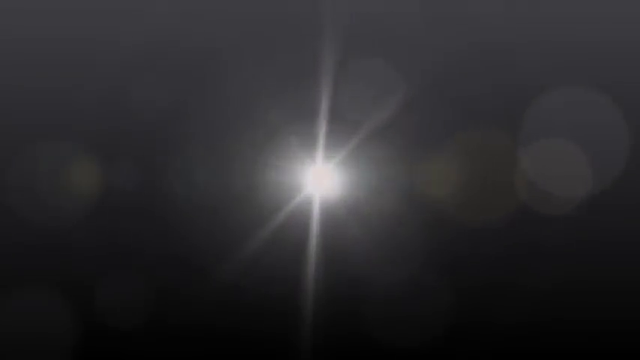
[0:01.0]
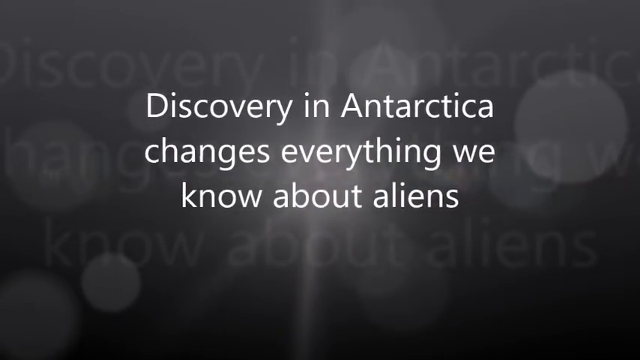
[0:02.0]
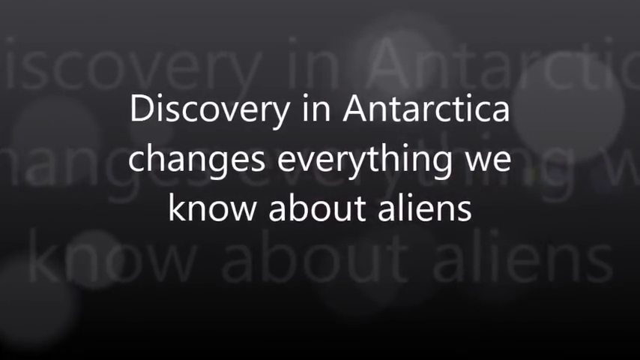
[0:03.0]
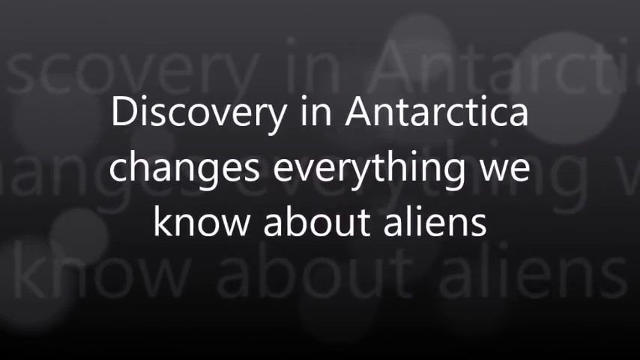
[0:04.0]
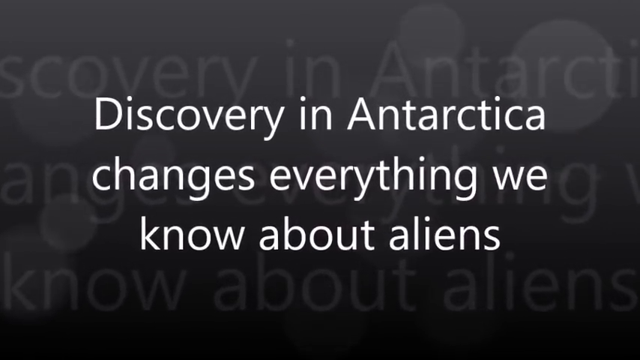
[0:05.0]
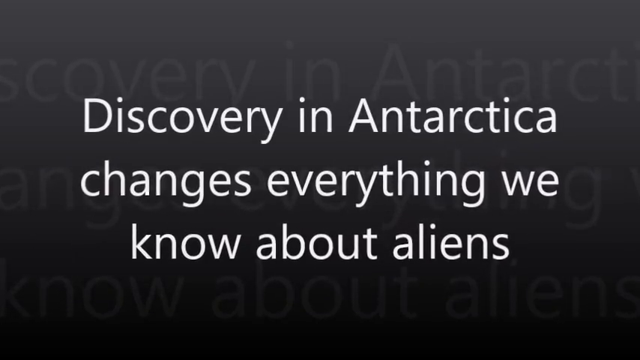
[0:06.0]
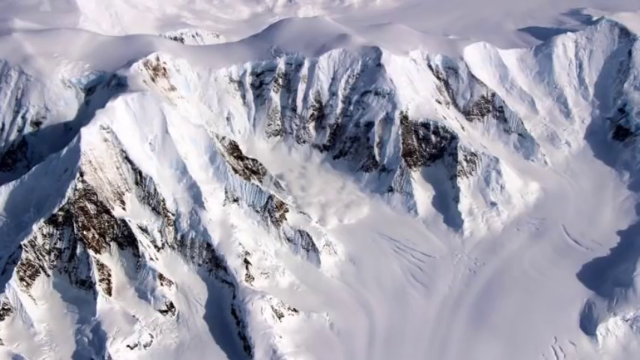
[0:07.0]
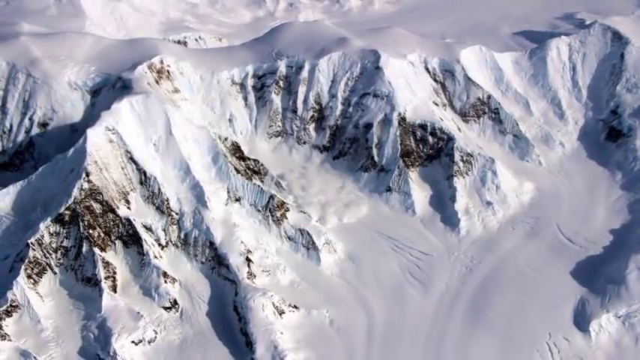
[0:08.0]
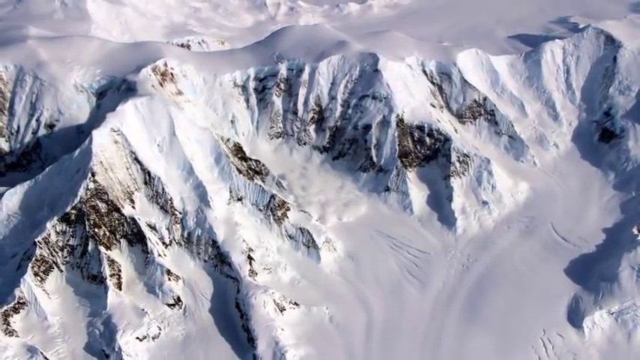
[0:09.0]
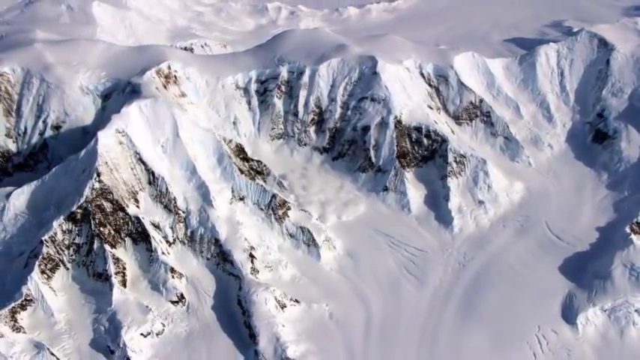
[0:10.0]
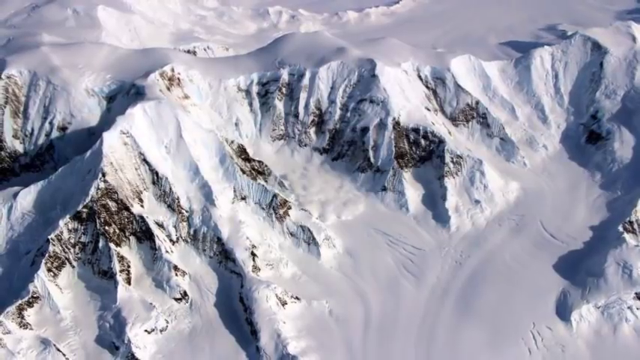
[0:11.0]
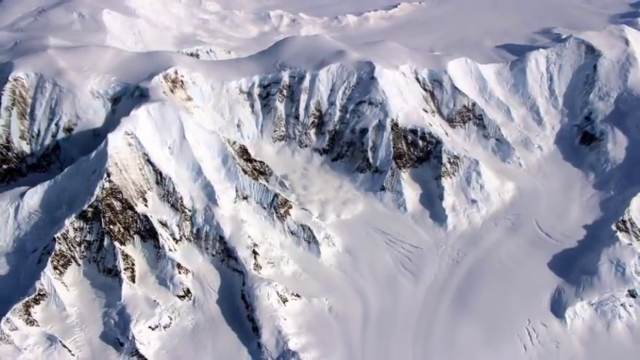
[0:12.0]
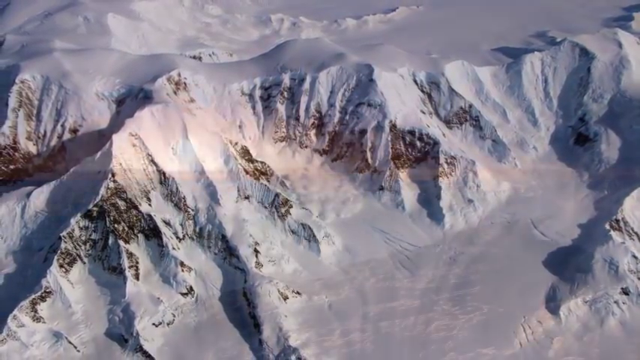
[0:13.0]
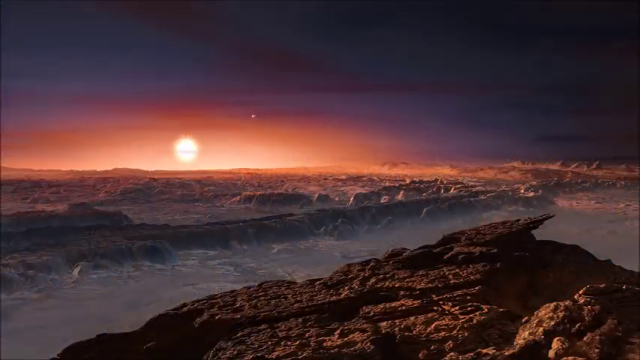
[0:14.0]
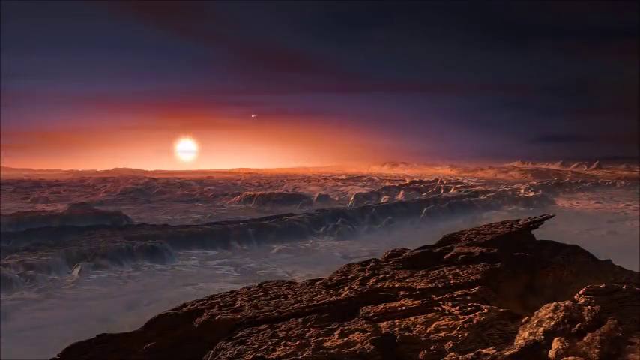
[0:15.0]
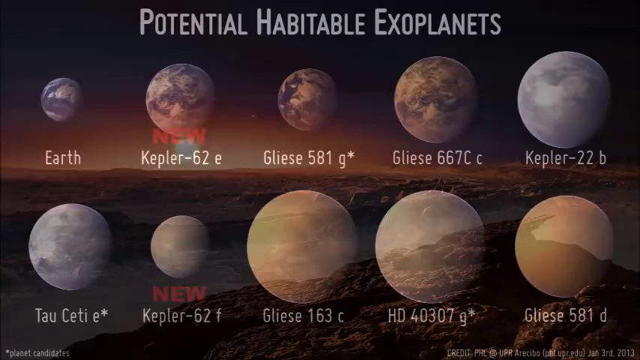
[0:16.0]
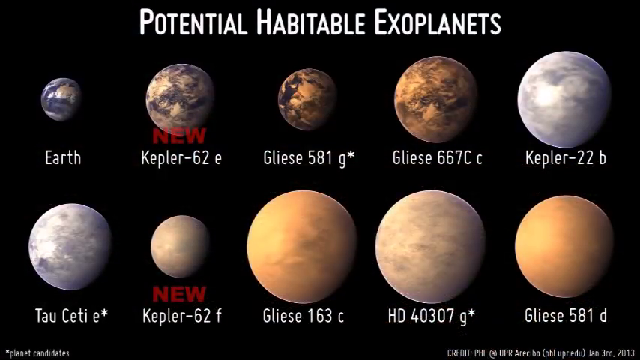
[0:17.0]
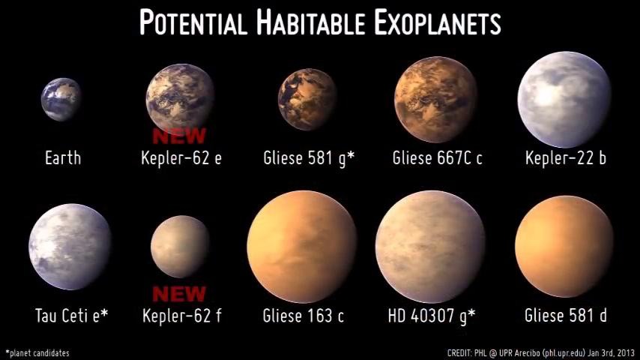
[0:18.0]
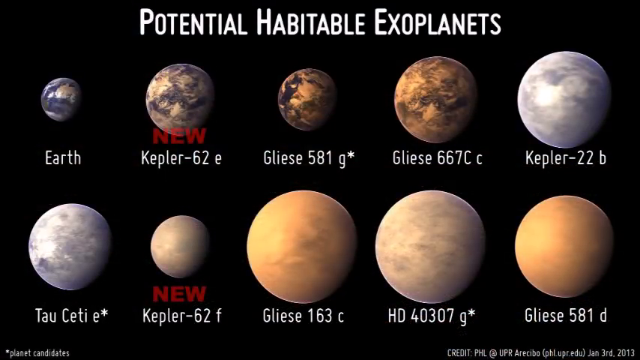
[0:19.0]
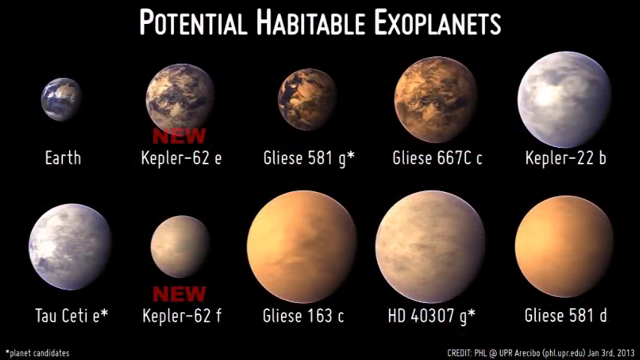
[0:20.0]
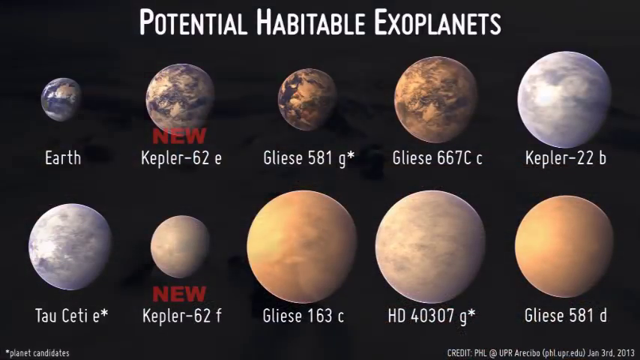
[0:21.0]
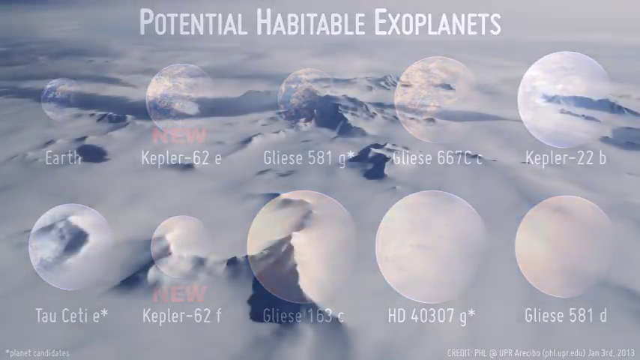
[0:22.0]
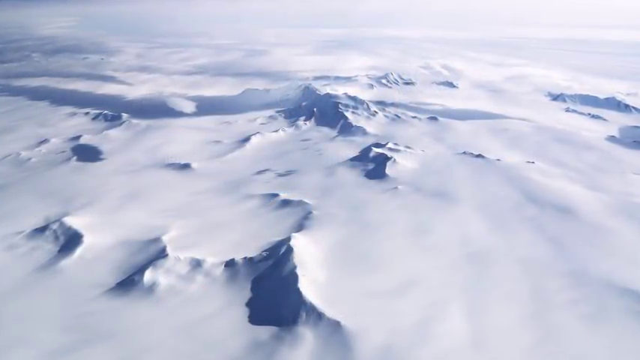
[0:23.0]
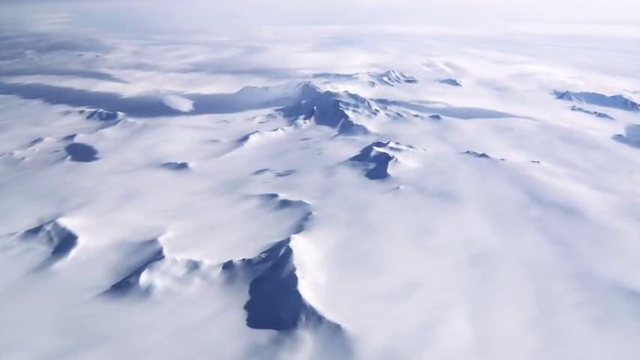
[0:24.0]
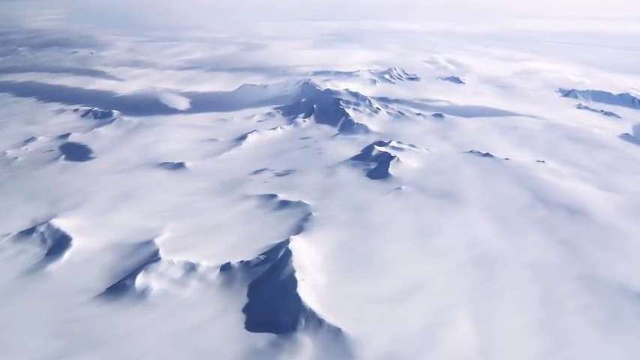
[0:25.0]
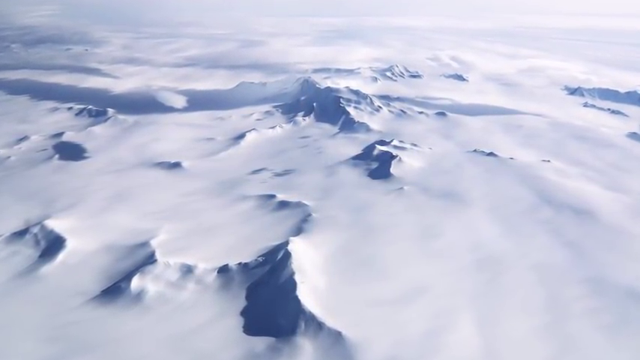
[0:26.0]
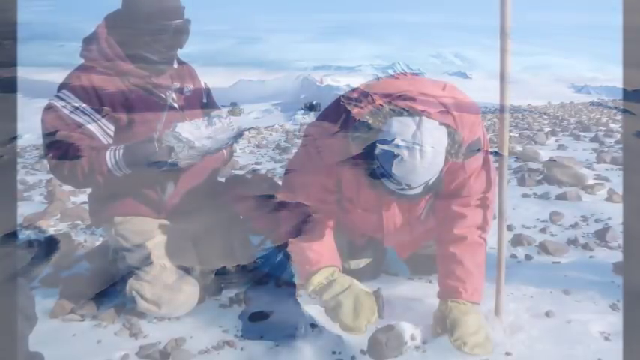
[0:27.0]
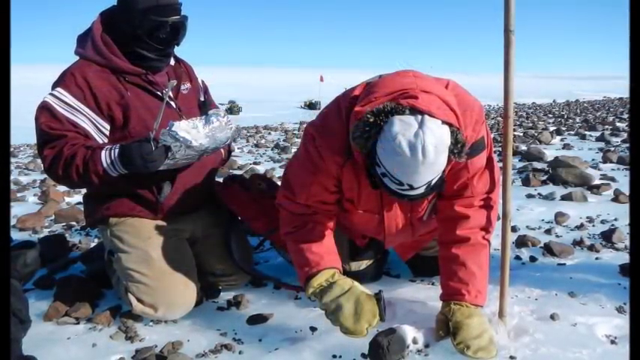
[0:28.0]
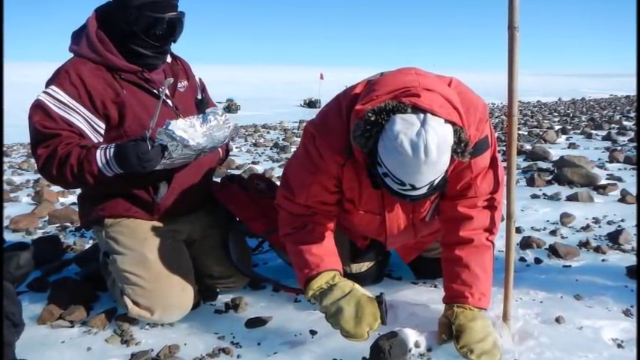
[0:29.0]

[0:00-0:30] A title in white font appears on a dark screen: "Discovery in Antarctica changed everything we know about aliens." Next comes an aerial-view photo of snowy mountains, followed by a sunset, apparently photographed in the mountains, with snow in another part of the photo. A chart of "potential habitable exoplanets" lists Earth, Kepler-62e, Gillesse 581g, Gillesse 667cc, Kepler-22b, Tau Ceti, Kepler-62f, Gillesse 163c, HD 40307g and Gillesse 580d. Another photo shows mountains, apparently in the clouds, with many white clouds. Finally a photo shows people in Antarctica.